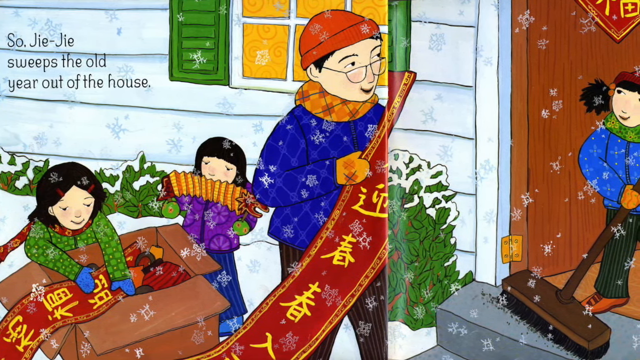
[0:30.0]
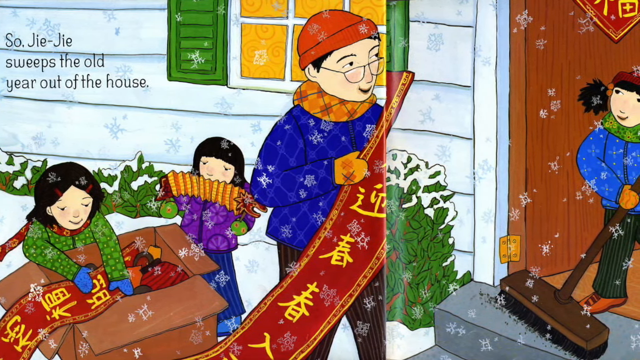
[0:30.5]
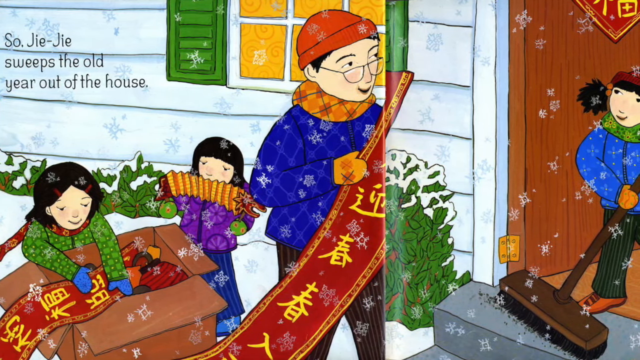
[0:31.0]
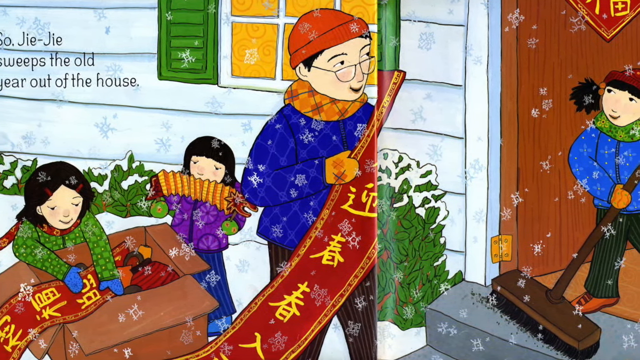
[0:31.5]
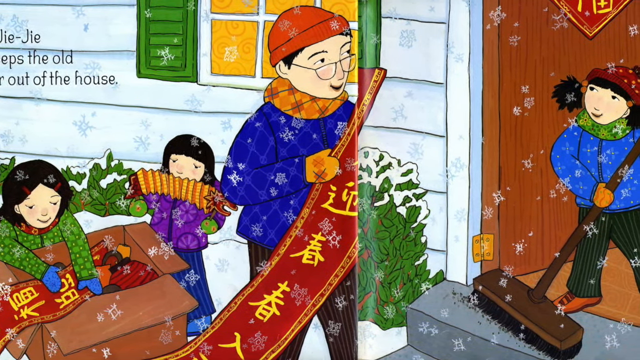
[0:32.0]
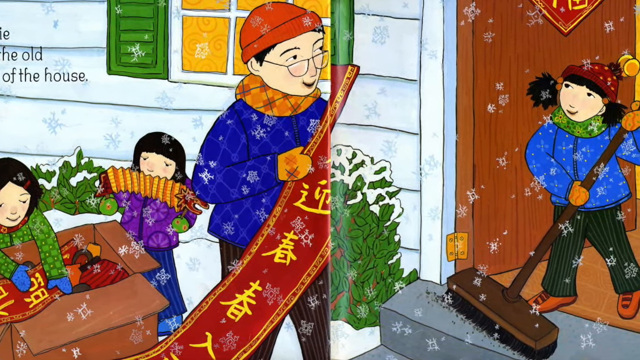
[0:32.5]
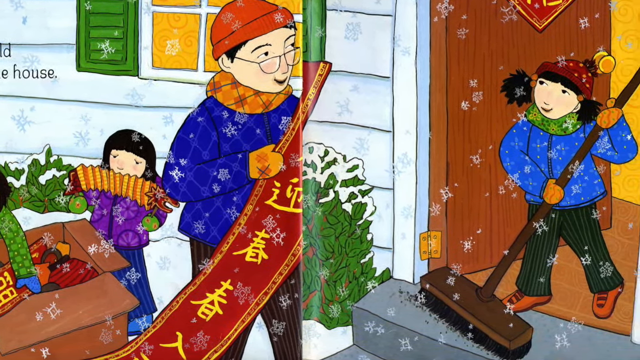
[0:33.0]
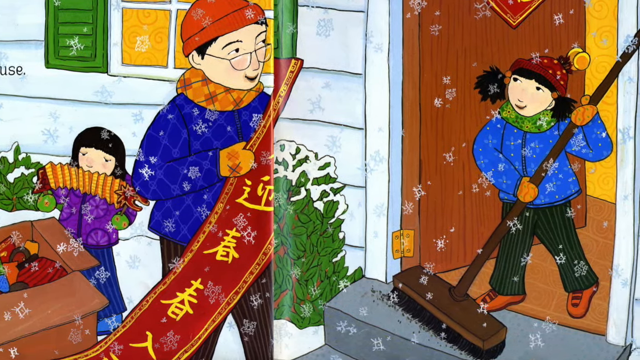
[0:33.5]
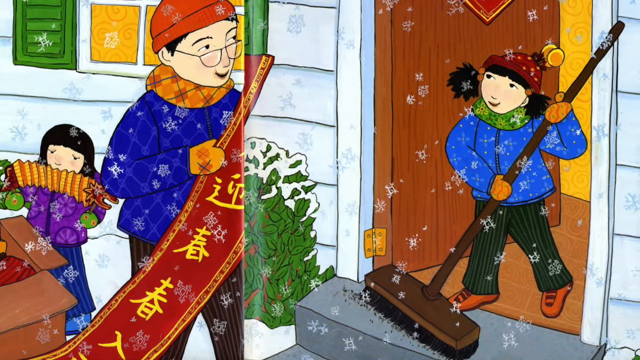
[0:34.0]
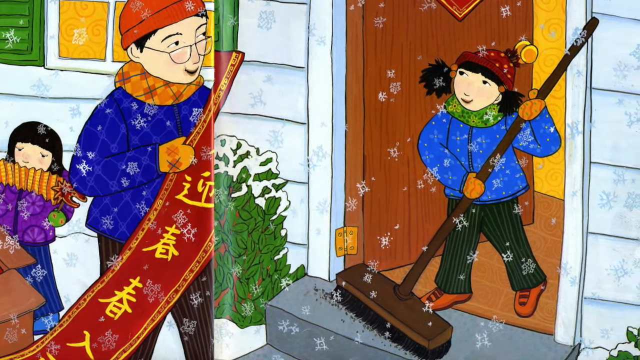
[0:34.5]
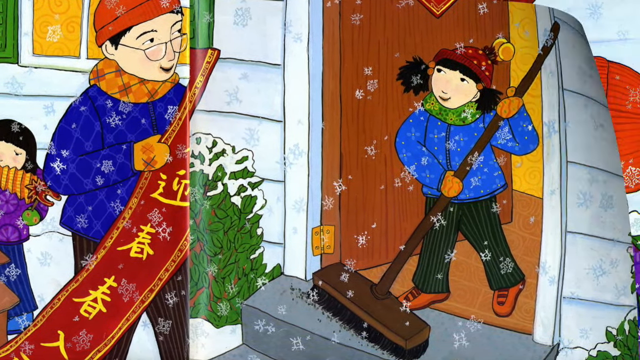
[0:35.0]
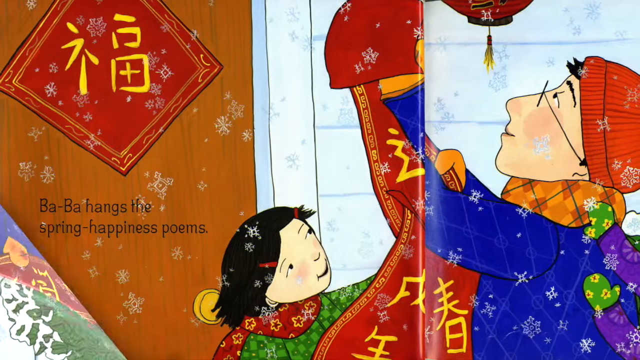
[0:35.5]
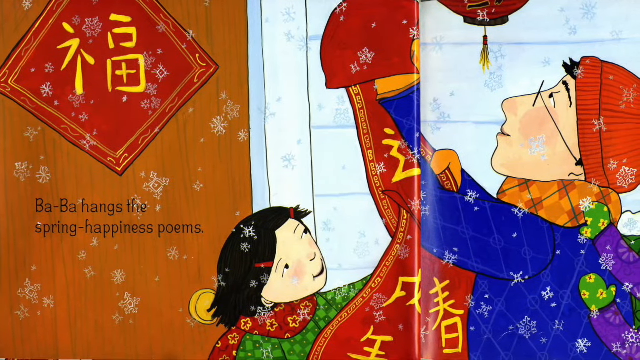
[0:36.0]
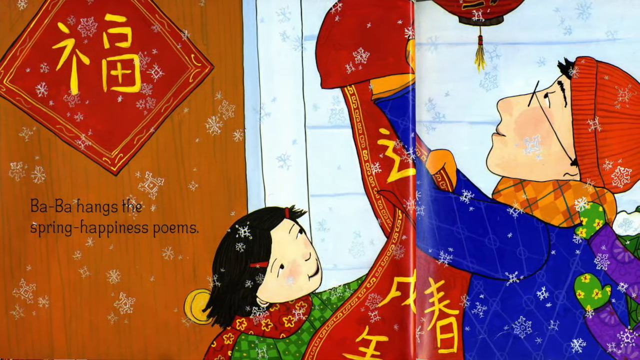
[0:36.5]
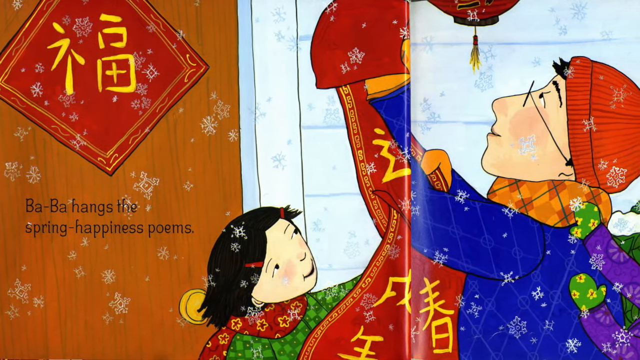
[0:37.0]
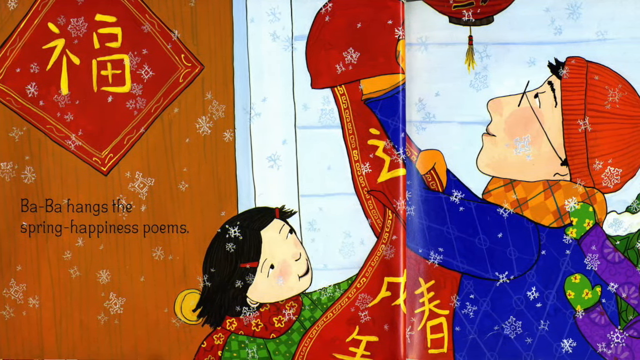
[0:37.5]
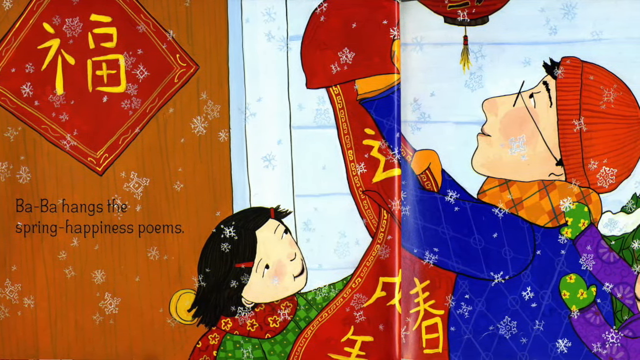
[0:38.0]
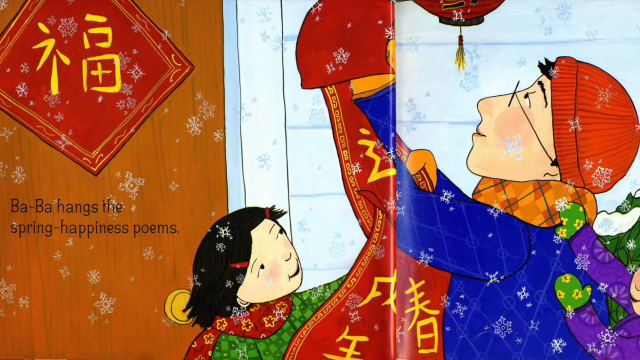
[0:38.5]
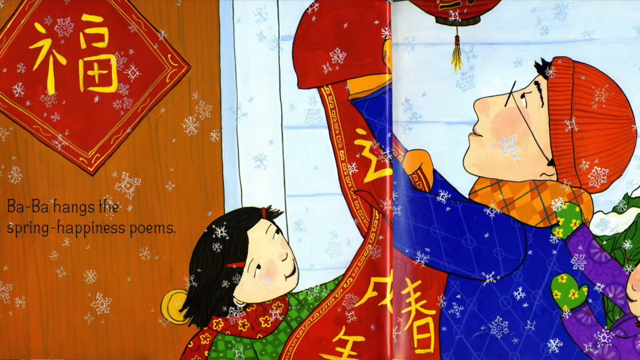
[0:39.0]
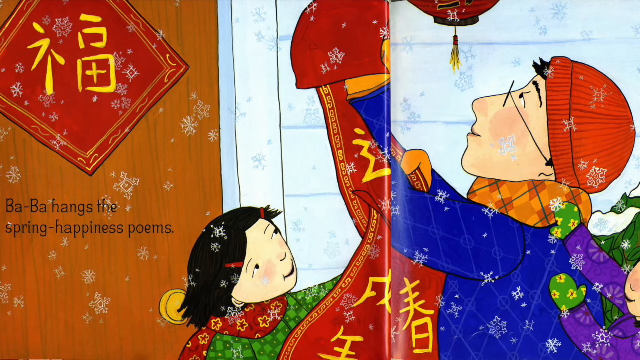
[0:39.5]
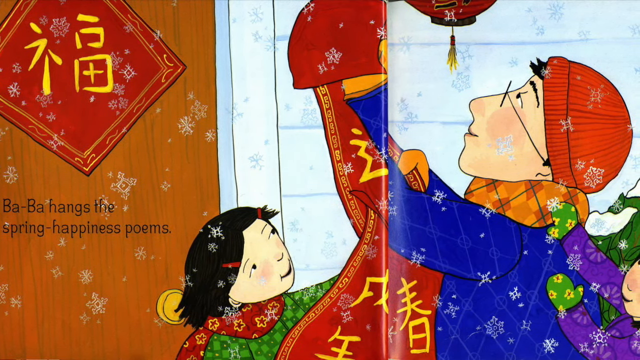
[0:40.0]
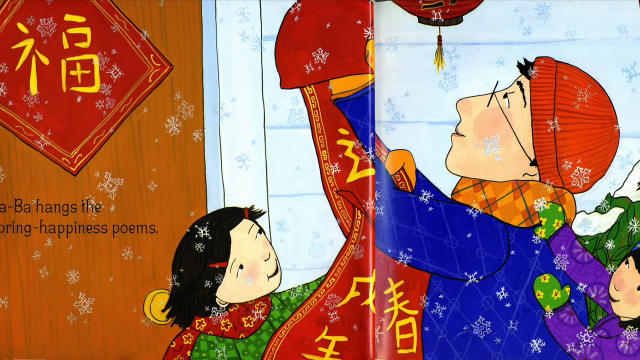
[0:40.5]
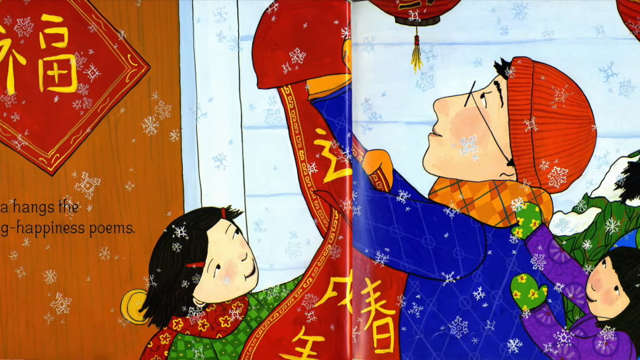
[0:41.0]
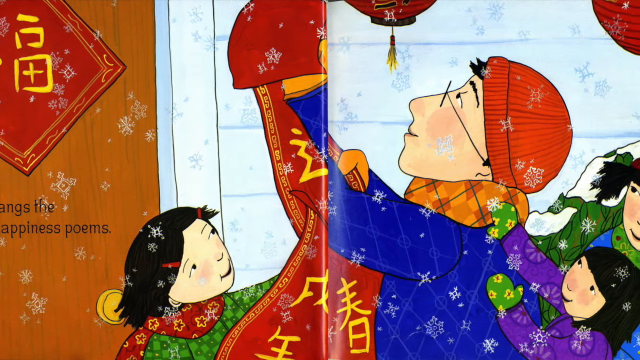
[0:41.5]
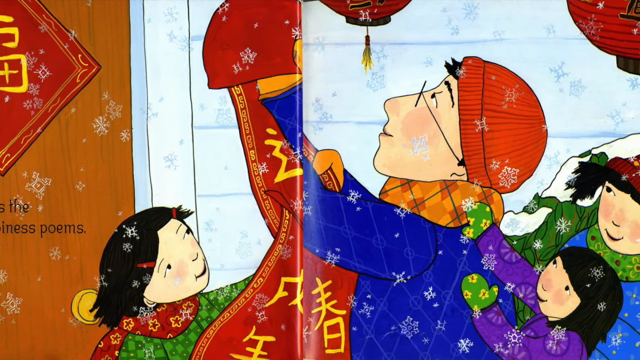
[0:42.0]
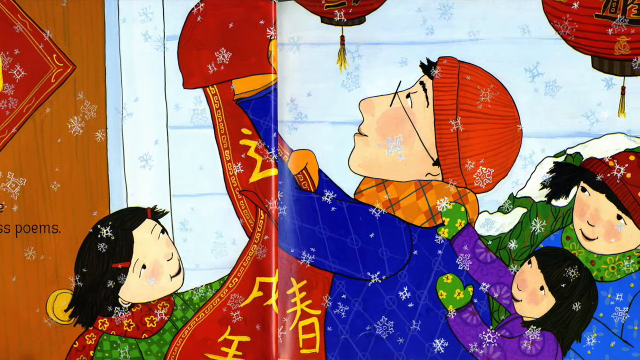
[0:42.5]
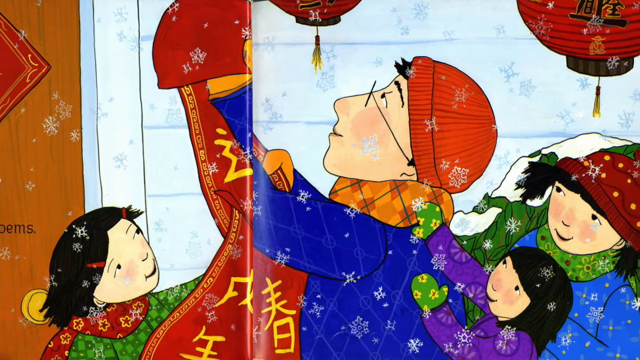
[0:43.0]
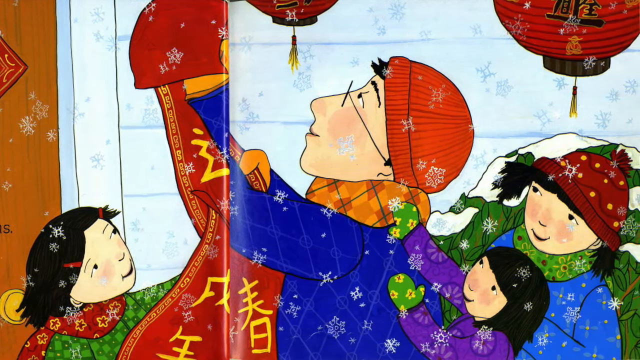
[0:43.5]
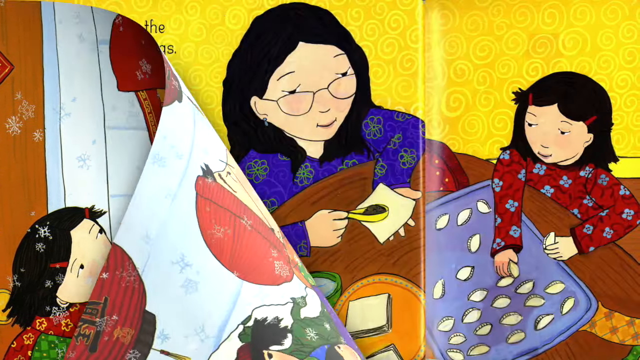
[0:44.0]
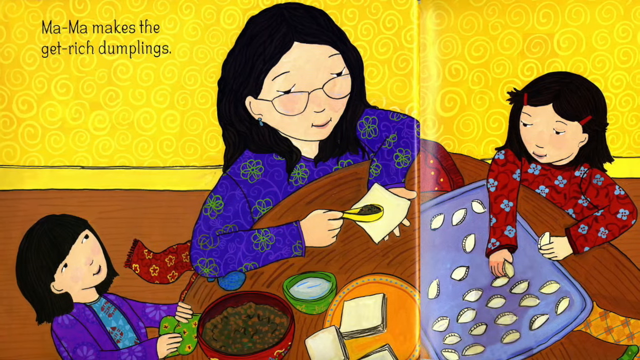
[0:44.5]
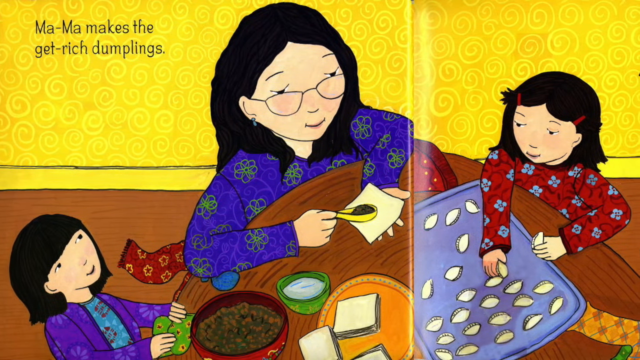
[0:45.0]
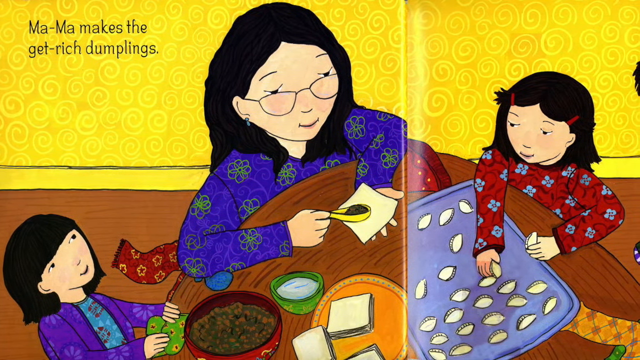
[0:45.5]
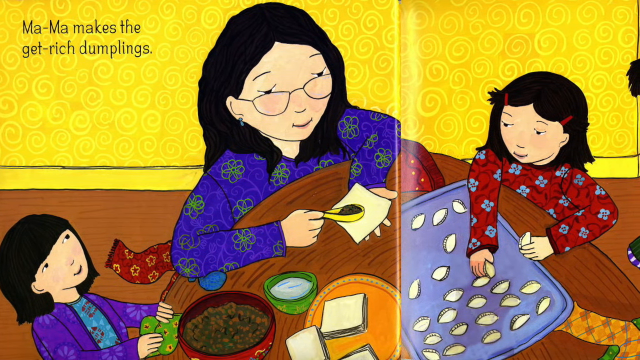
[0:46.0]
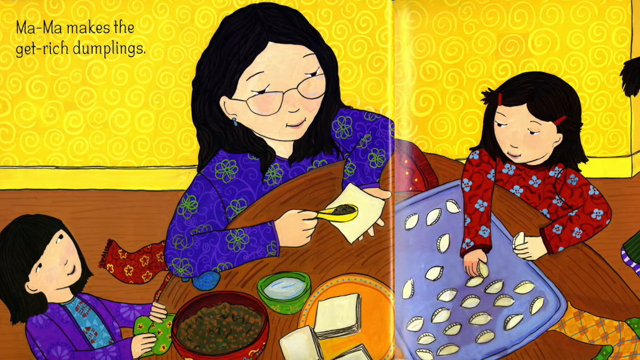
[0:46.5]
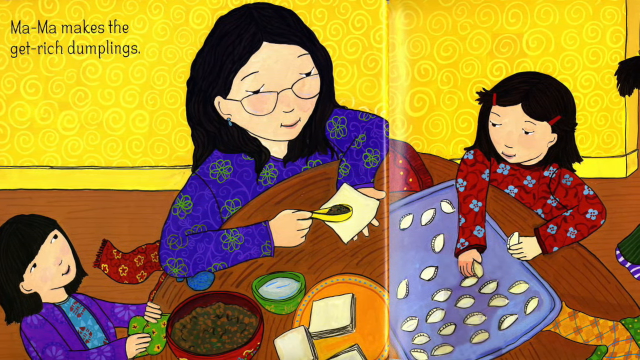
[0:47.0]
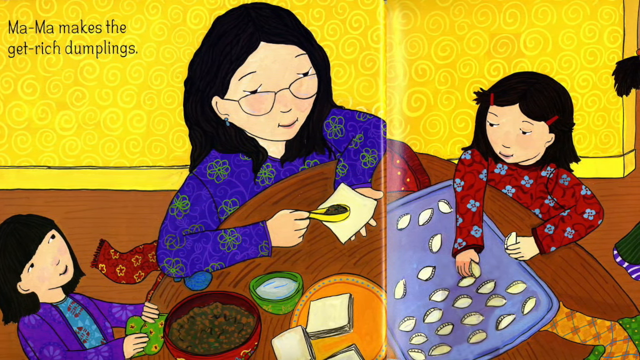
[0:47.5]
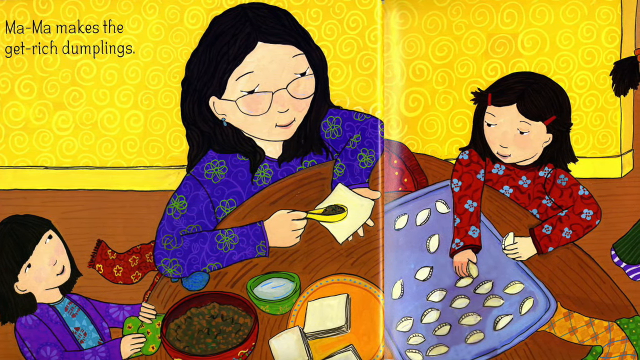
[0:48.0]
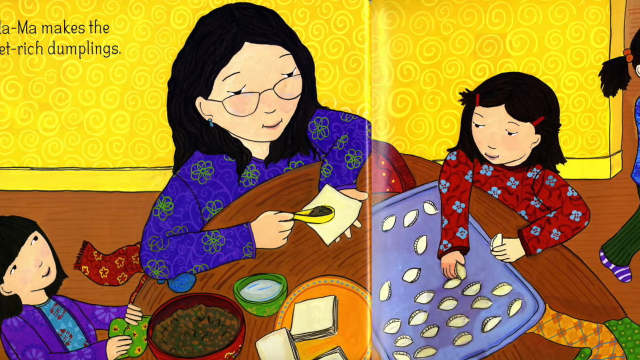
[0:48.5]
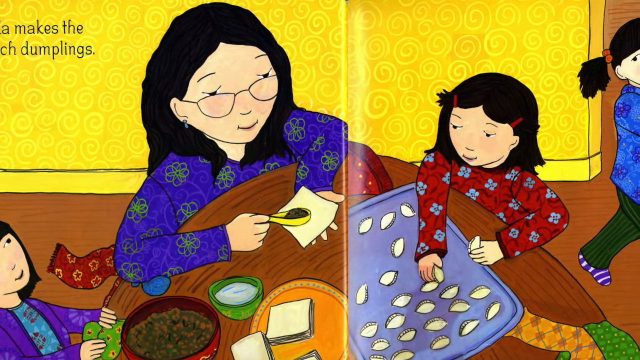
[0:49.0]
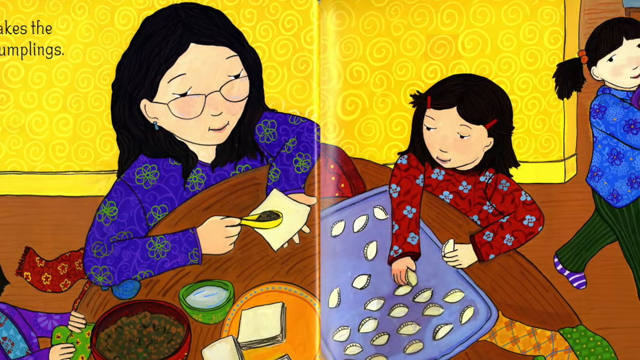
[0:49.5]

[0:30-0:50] On the left, the page reads "So, Jie-Jie sweeps the old year out of the house." The family appears to be putting decorations away and maybe pulling out new ones, and on the far right what may be a child or a mother sweeps things out the door. The view slowly pans to the right, then the page turns to one reading "Baba hangs the spring happiness poems" on the left. A girl in a green shirt and a red scarf, or maybe a jacket, helps a father or older brother hang some tapestries, with more family members behind the father. The page turns again to one reading "Mama makes the rich dumplings." Two children around the table help Mama, and a third child walks away with the dumplings.